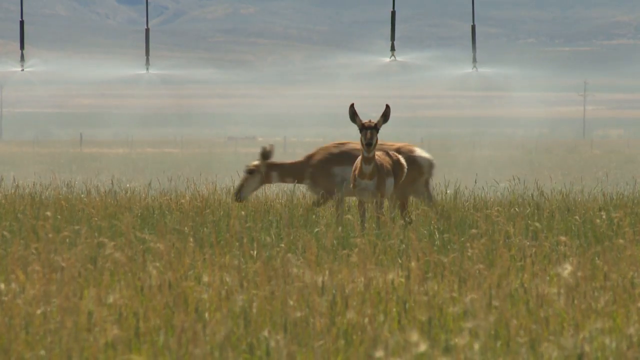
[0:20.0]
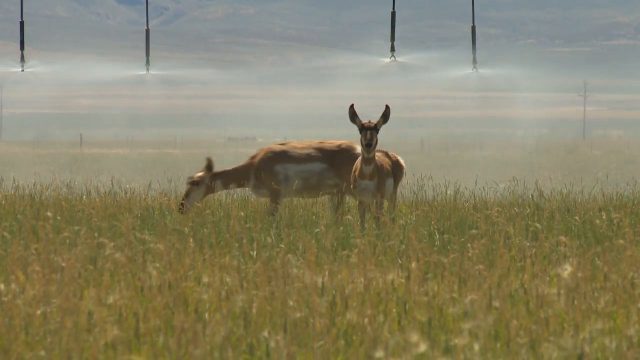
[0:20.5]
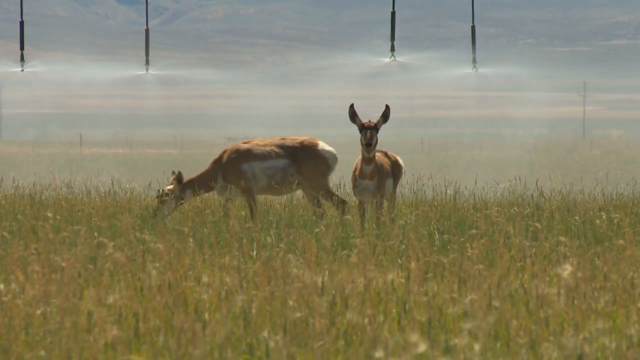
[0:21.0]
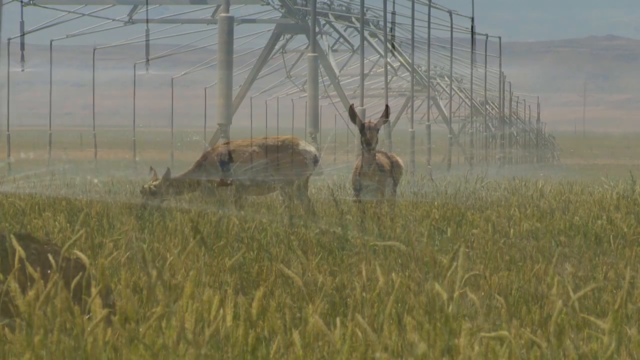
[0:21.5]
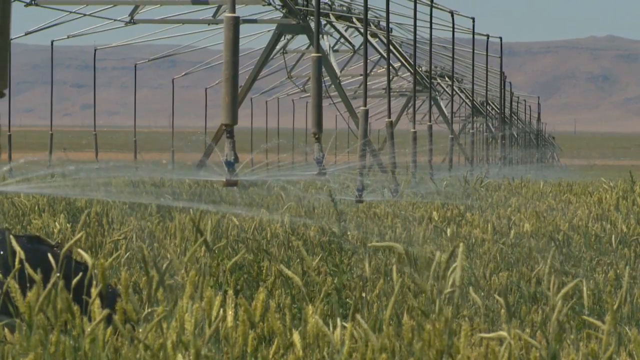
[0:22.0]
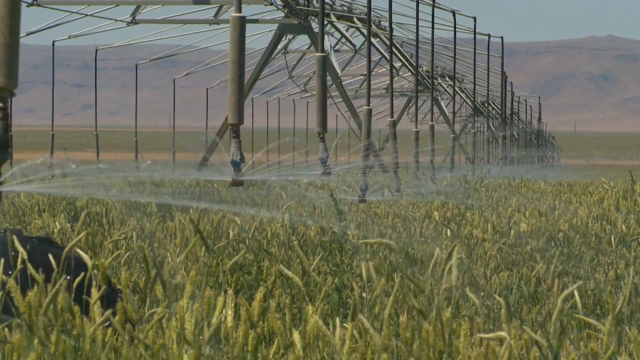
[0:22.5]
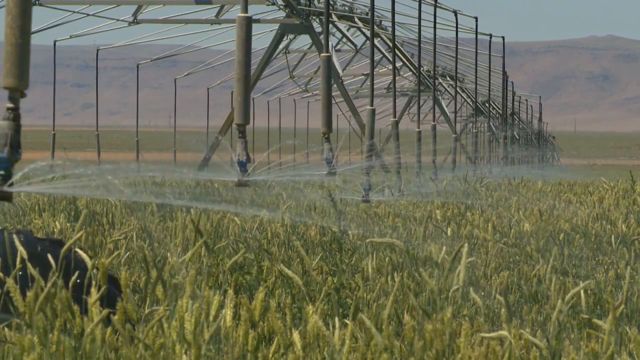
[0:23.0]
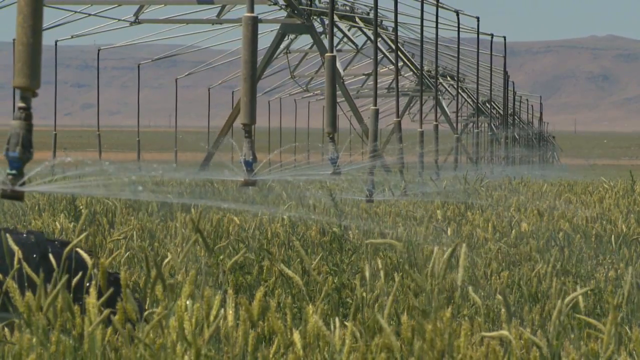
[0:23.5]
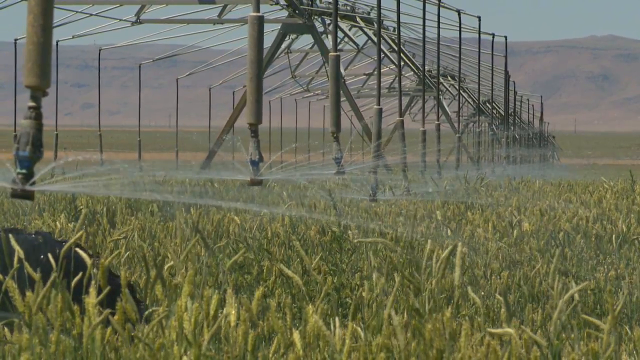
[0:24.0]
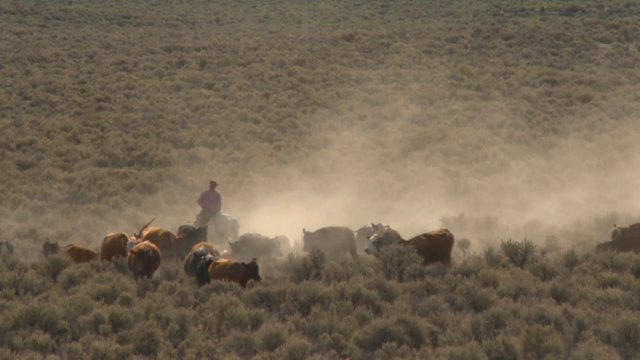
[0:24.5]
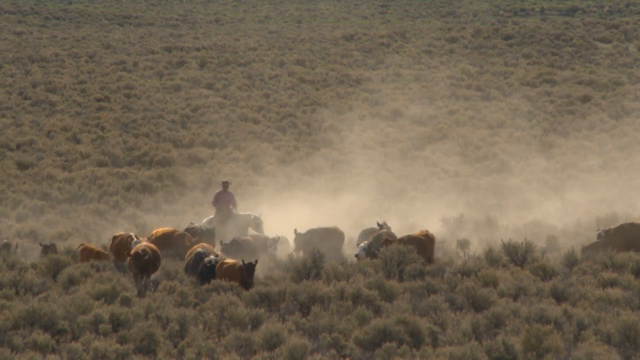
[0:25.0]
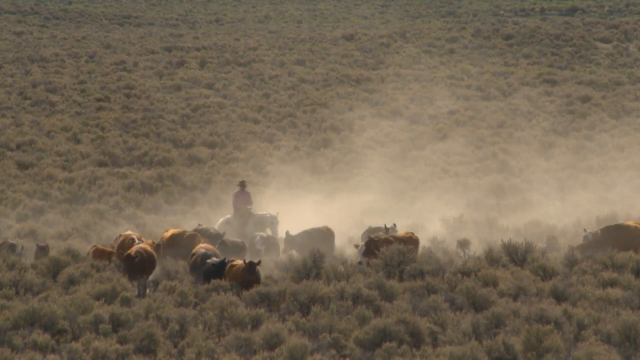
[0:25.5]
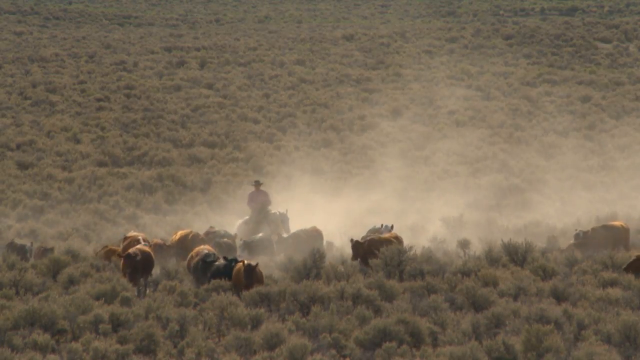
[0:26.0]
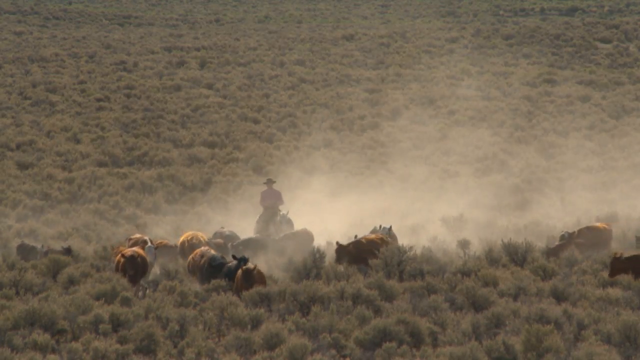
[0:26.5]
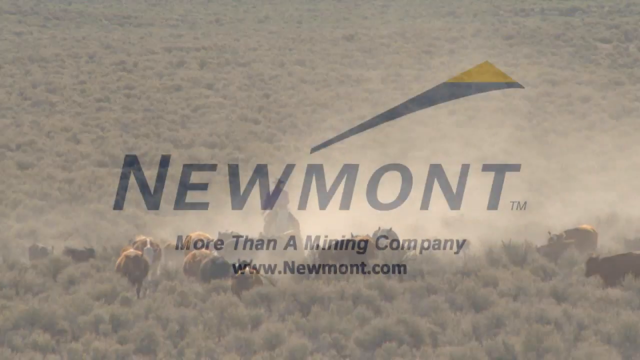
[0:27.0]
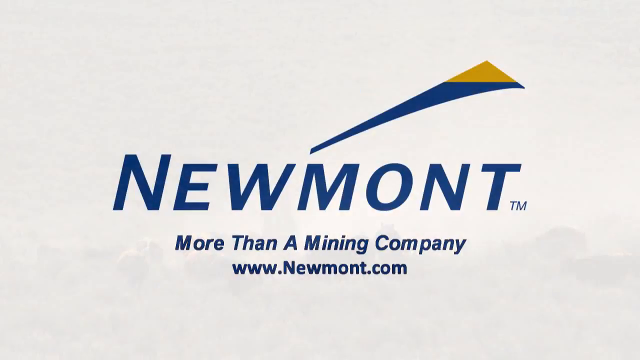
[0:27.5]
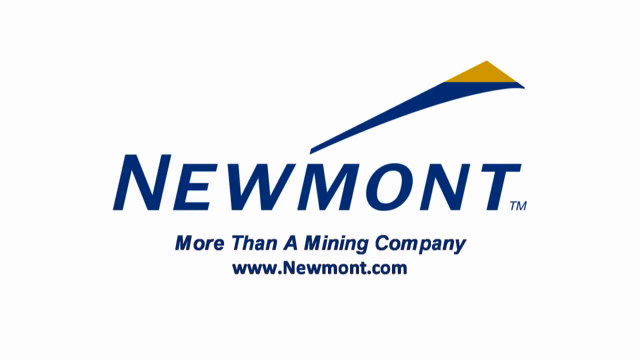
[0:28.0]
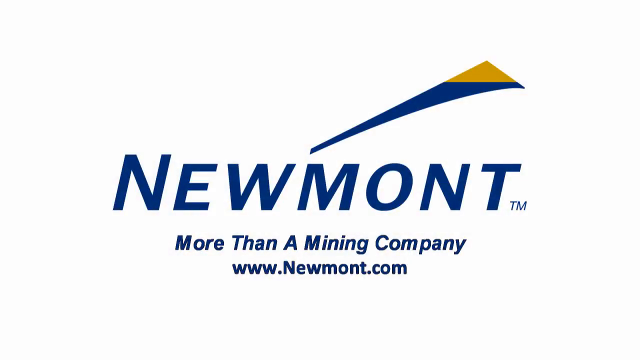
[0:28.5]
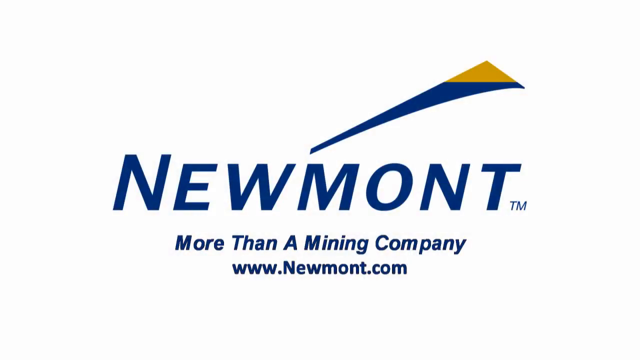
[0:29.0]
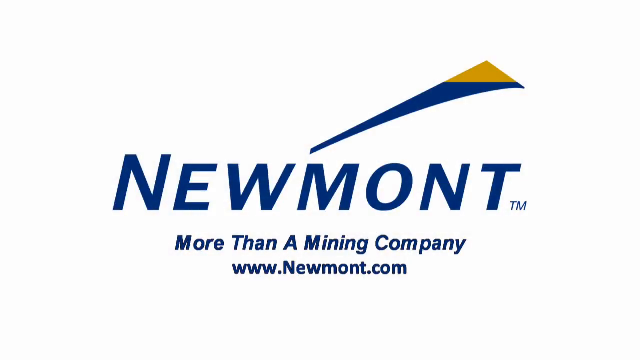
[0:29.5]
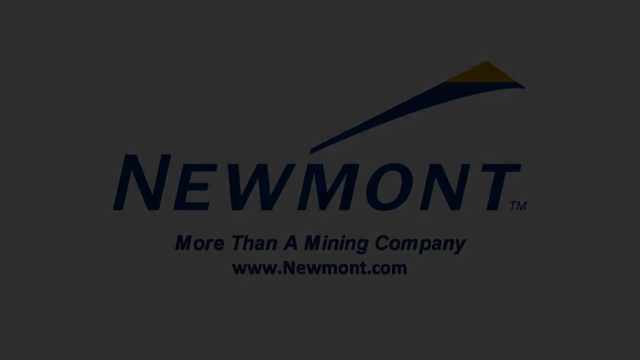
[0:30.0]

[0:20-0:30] Animals in a field appear to be grazing, while structures above them water the field from overhead as automatic watering devices. A cowboy rides through a field of cattle, rounding them up. A credit screen then shows "Newmont" with a royal blue and gold logo that looks like an upside-down triangle, along with "This is more than a mining company." Underneath is the web address "www.newmont.com".